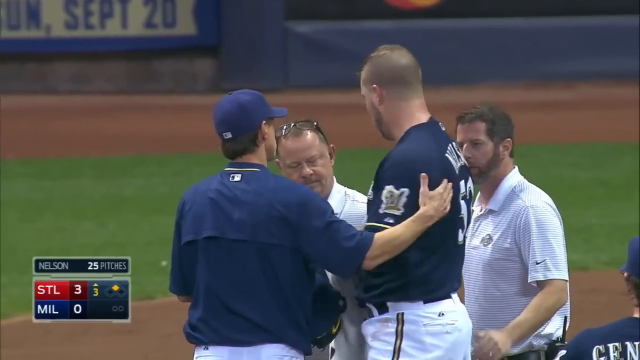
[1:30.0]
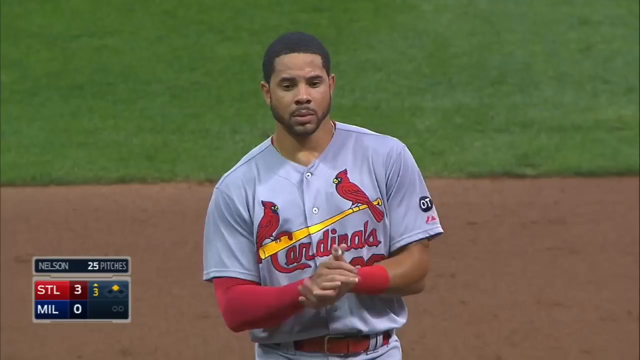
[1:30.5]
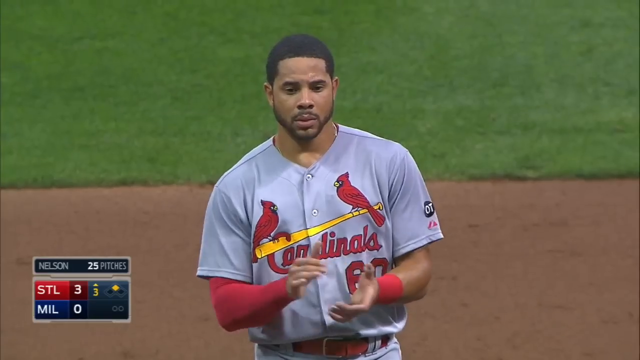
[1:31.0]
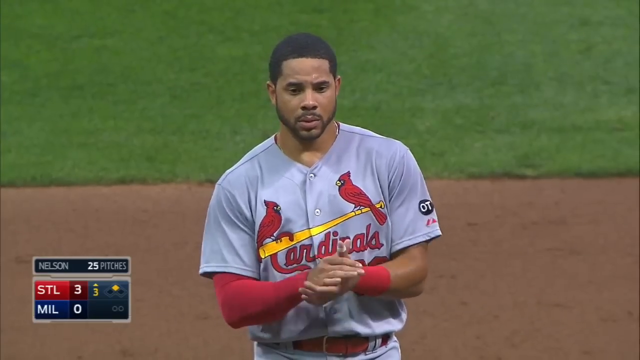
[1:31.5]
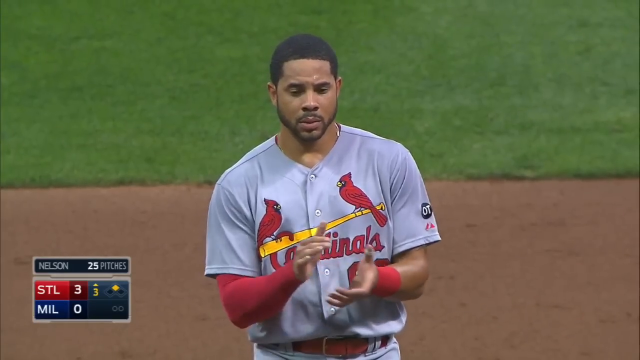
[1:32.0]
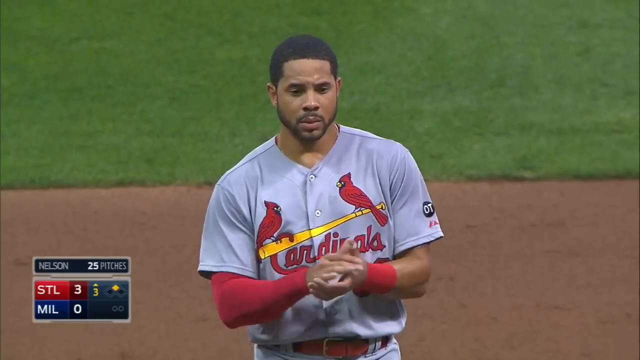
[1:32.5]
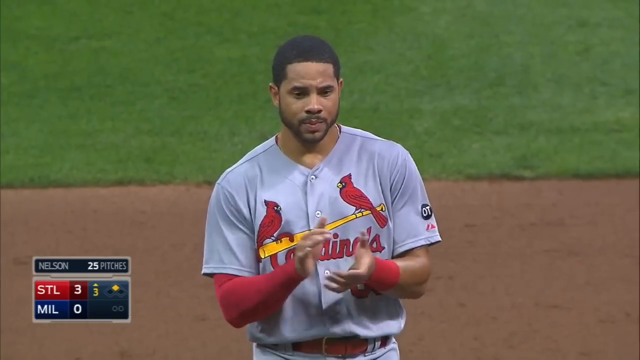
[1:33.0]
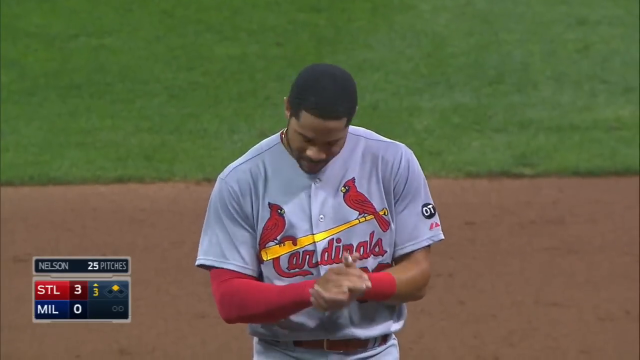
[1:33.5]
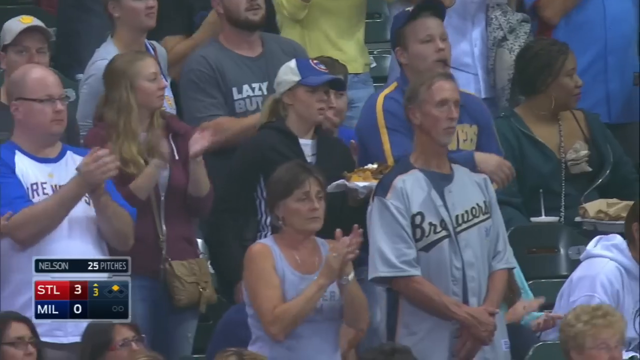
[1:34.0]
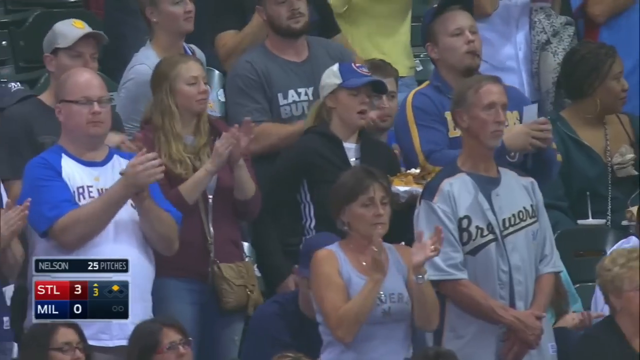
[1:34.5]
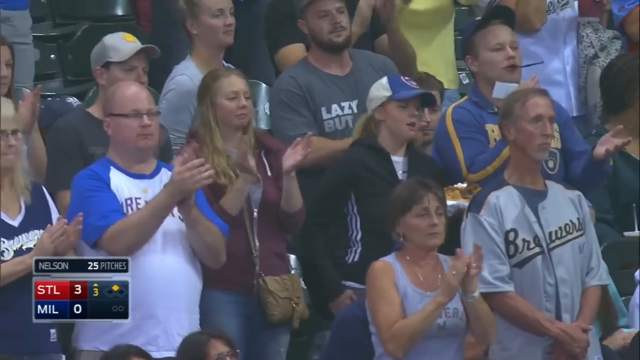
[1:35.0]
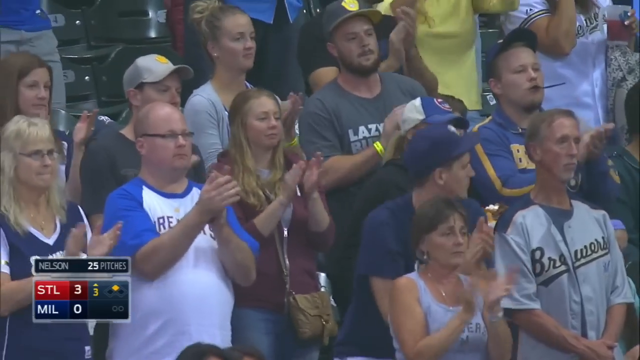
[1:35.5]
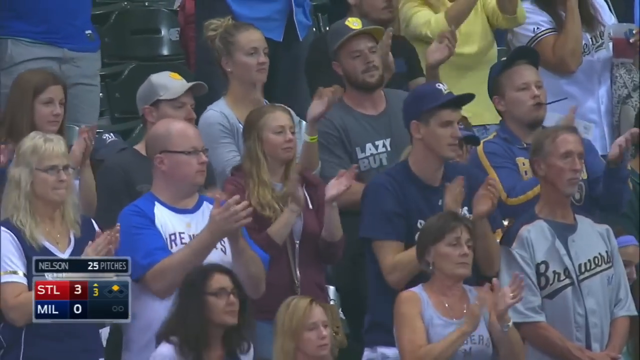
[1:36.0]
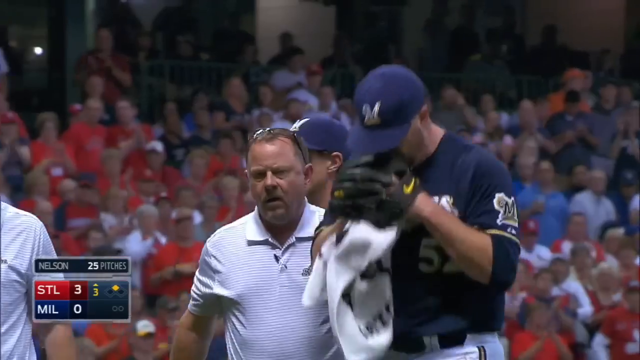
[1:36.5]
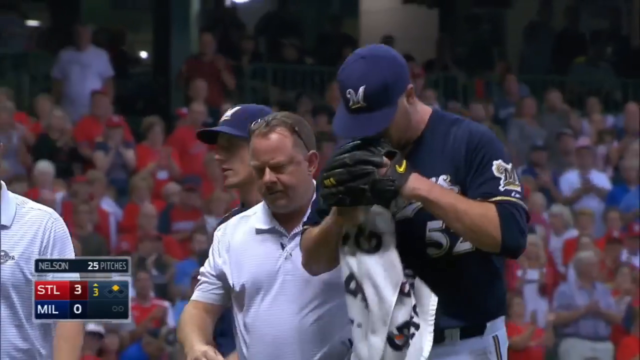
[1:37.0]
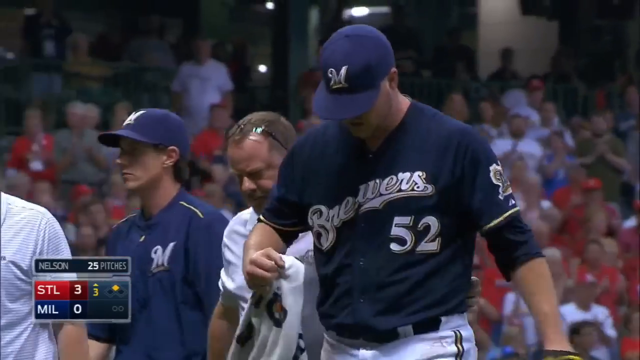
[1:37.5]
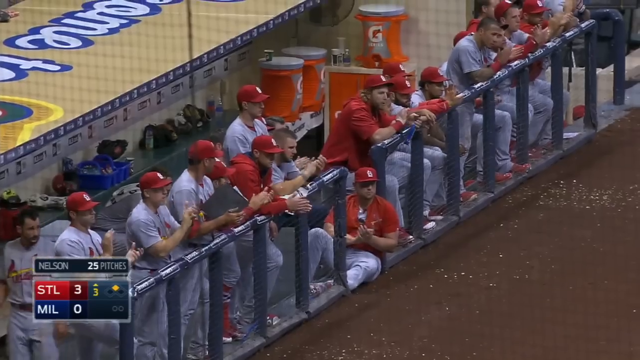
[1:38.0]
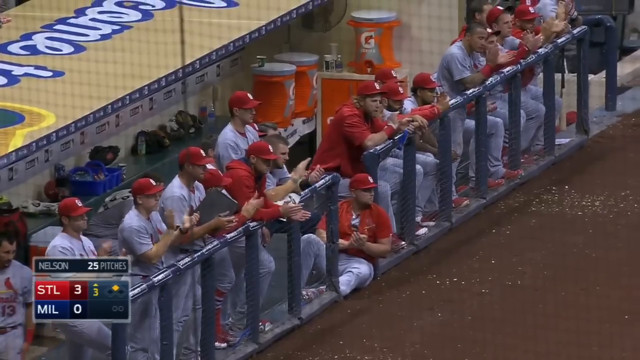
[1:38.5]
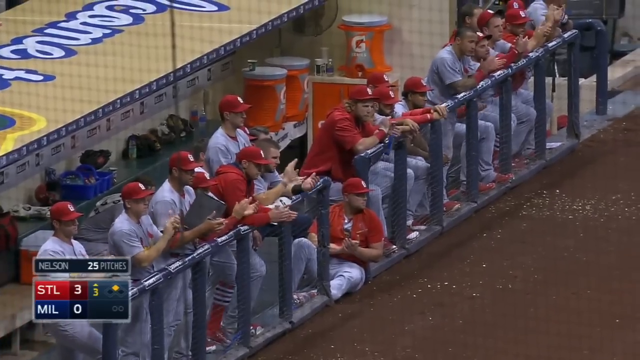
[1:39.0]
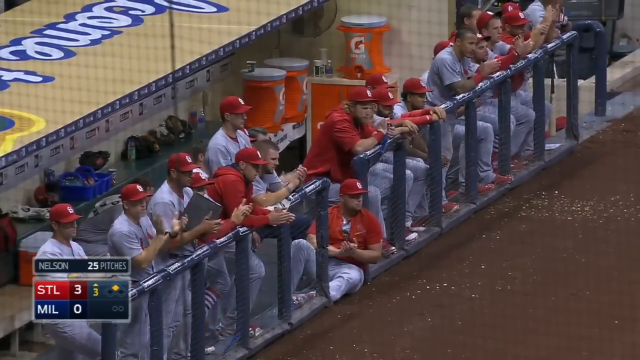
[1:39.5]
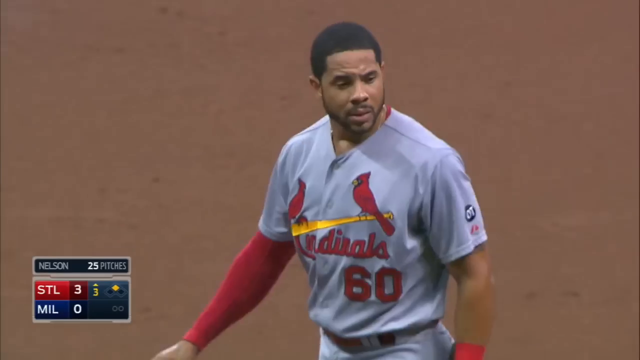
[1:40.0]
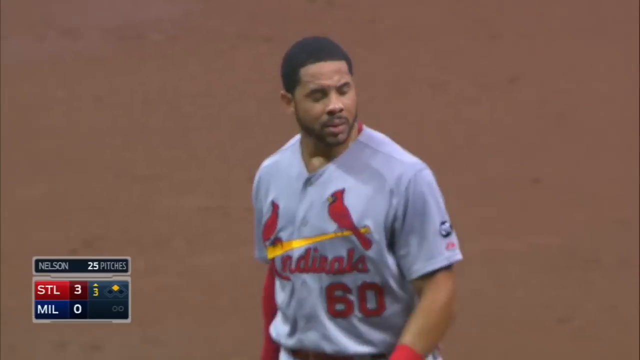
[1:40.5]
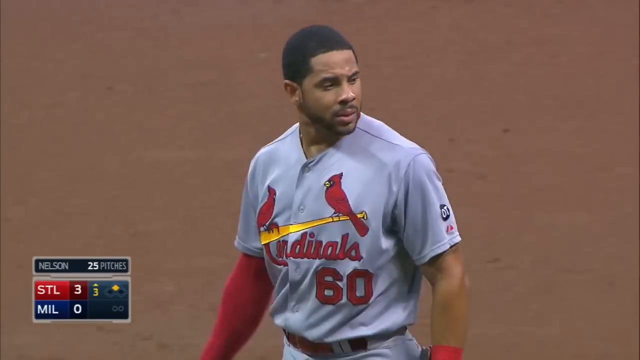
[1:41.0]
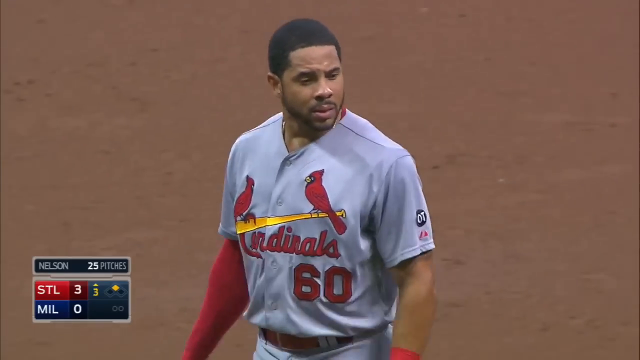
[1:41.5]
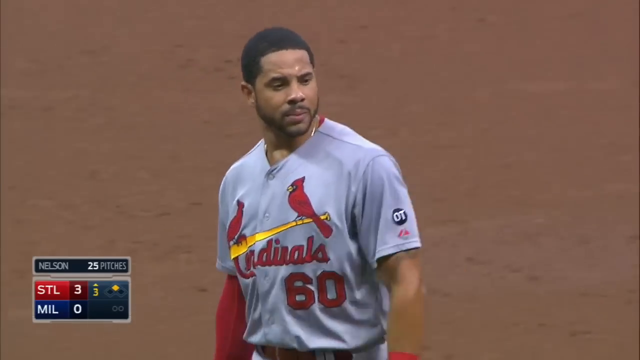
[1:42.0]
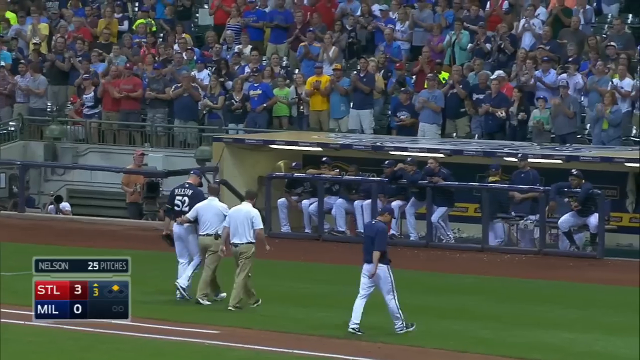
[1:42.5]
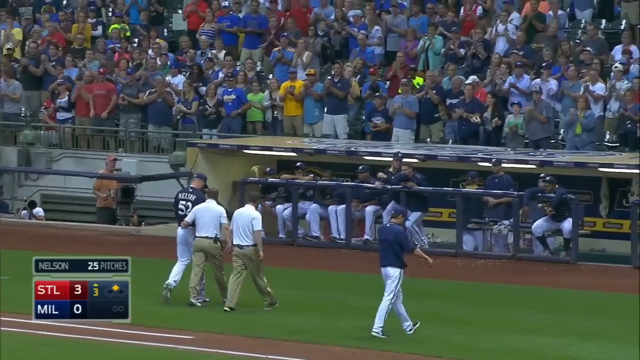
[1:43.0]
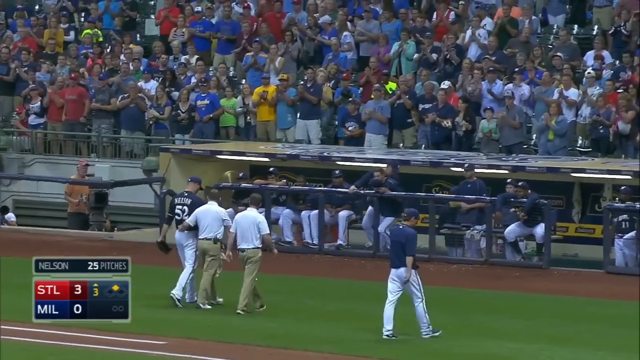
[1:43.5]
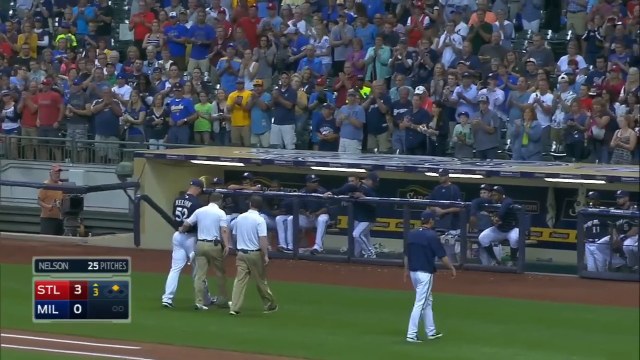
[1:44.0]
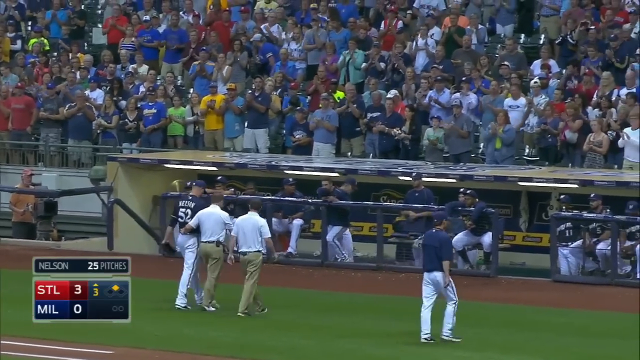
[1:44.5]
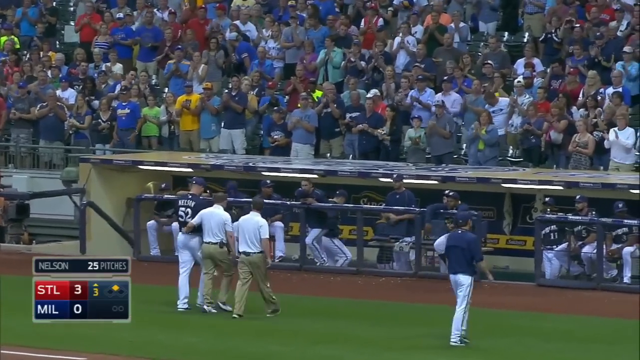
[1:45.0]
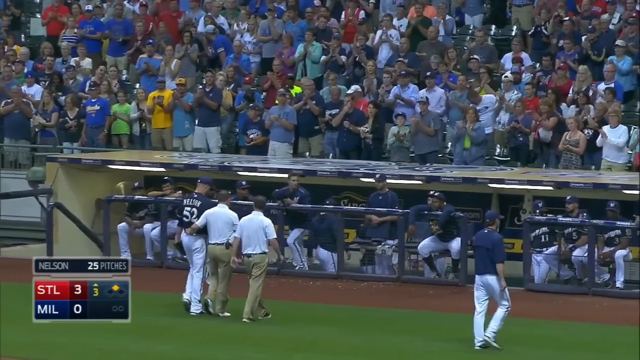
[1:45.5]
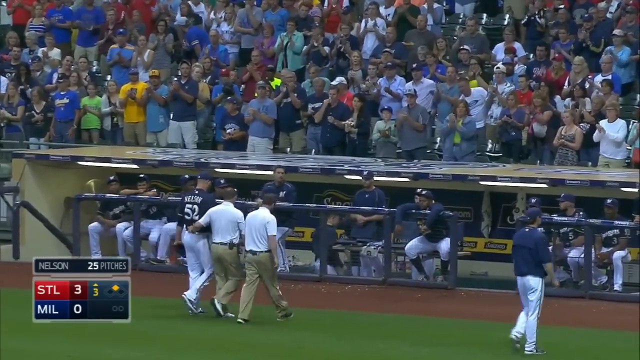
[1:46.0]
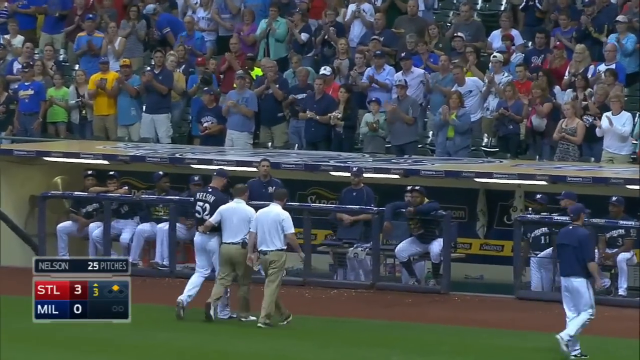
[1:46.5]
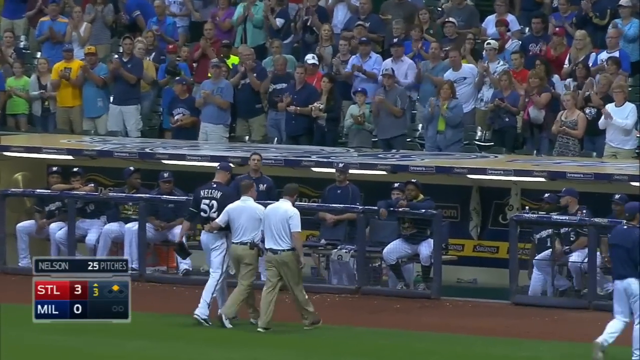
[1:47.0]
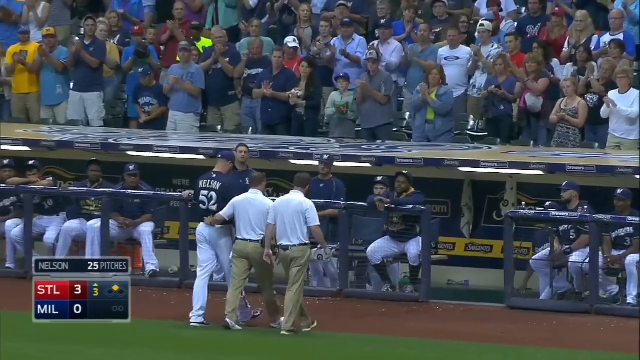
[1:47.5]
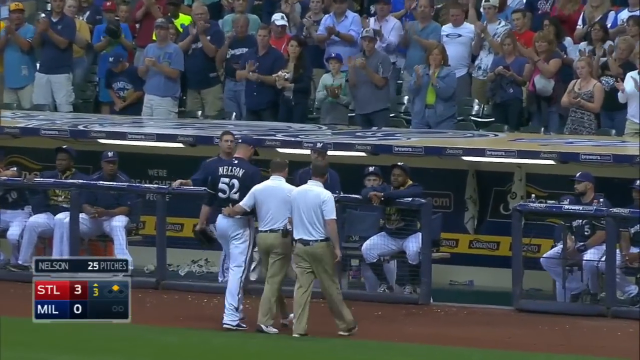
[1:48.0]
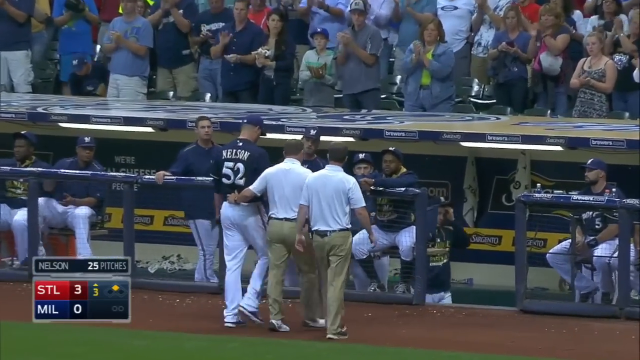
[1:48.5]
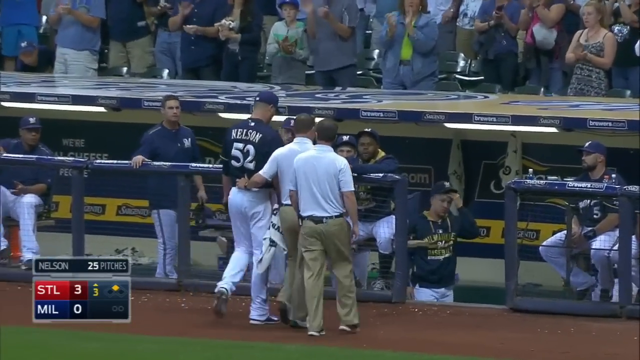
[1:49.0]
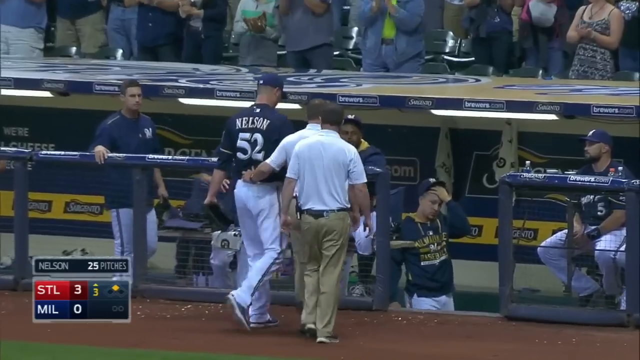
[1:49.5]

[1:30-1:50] Nelson stands for the first time, helped up by the two trainers and a Milwaukee coach or manager in a blue windbreaker who puts his right hand on Nelson's left shoulder. Pham stands on second base looking bereft and claps as Nelson rises. The fans all rise to their feet, looking sad and clapping energetically. Nelson is led off the field, moving from right to left across the screen. In the St. Louis dugout every player holds on to the railing and claps energetically. Pham is shown on second base, seemingly unsure what to do, as Nelson is led into the dugout.